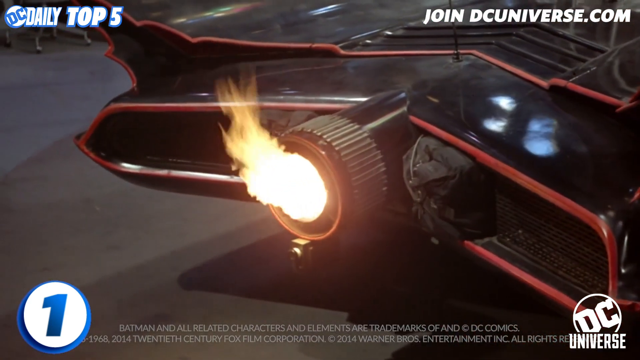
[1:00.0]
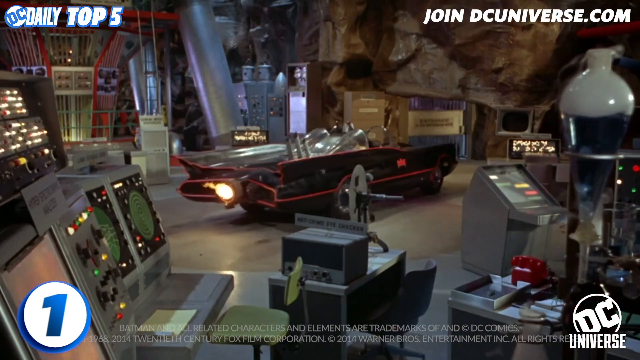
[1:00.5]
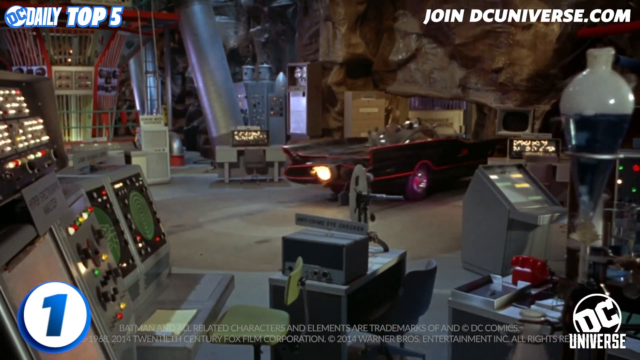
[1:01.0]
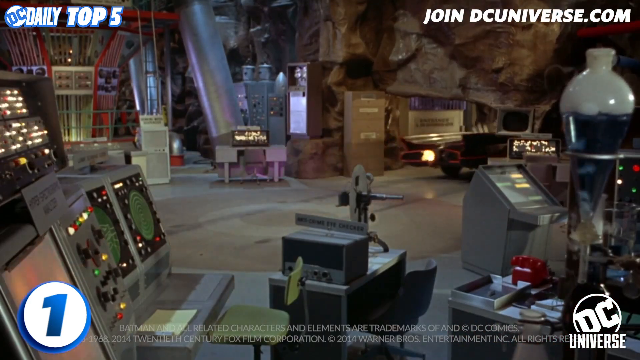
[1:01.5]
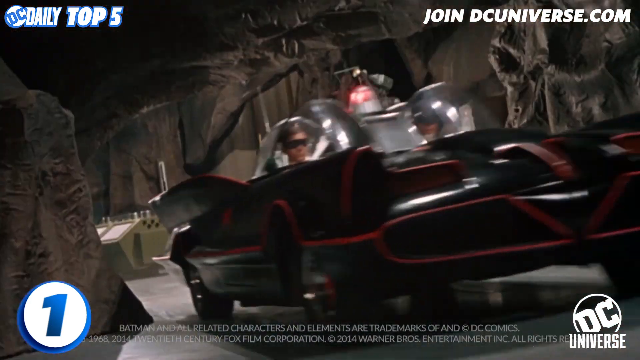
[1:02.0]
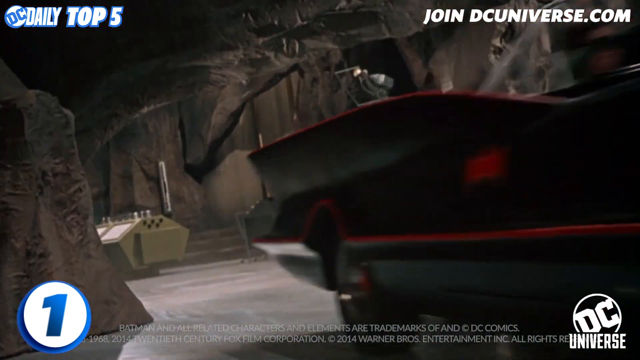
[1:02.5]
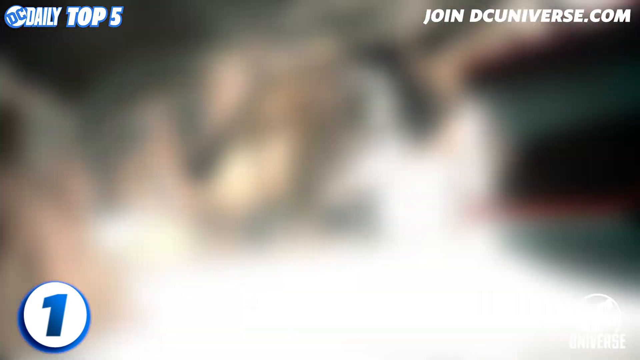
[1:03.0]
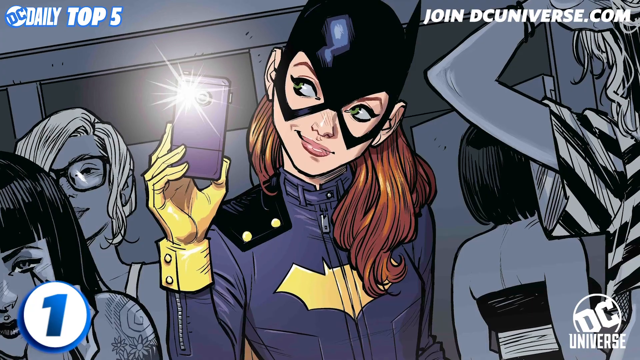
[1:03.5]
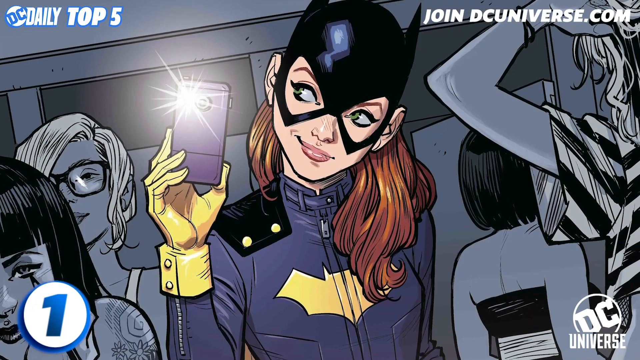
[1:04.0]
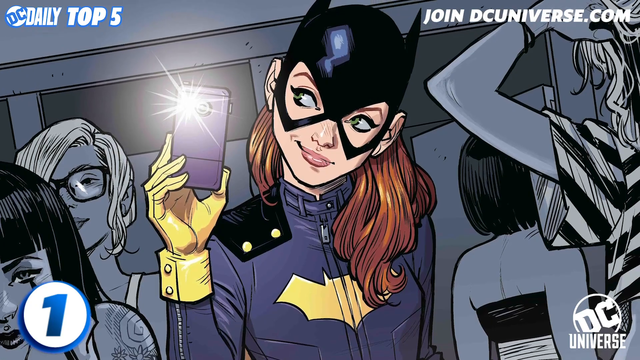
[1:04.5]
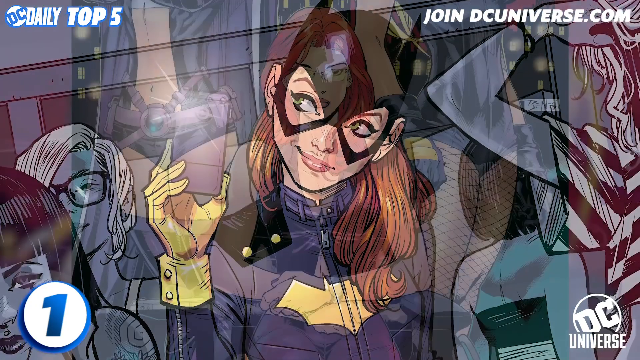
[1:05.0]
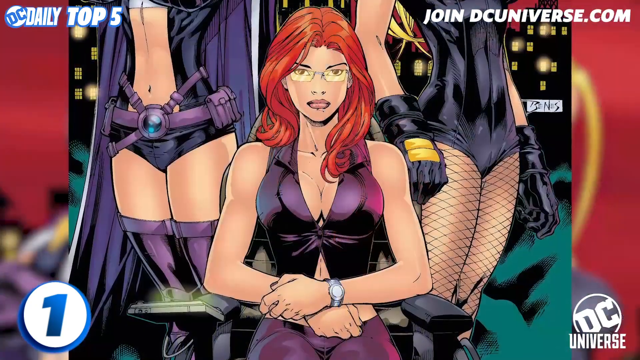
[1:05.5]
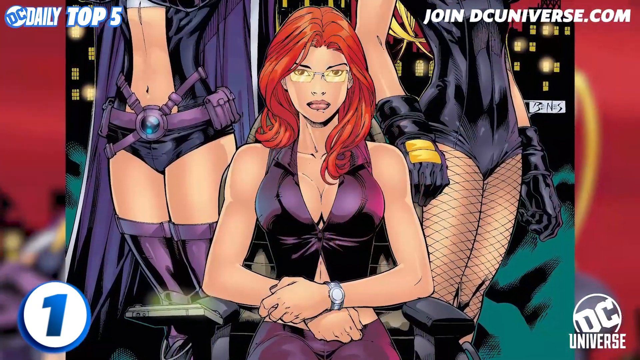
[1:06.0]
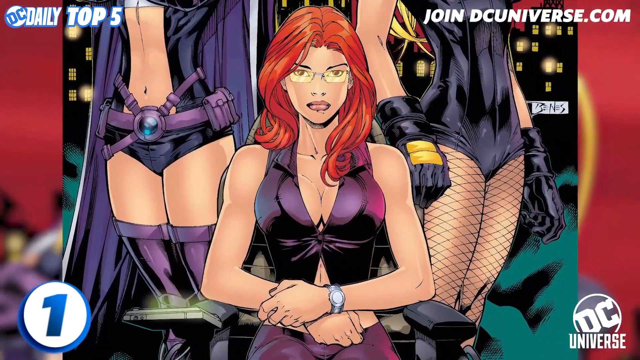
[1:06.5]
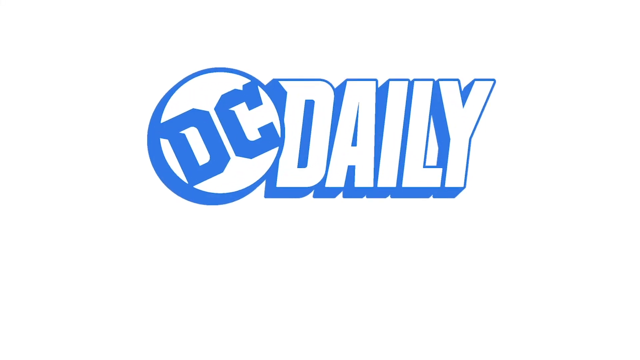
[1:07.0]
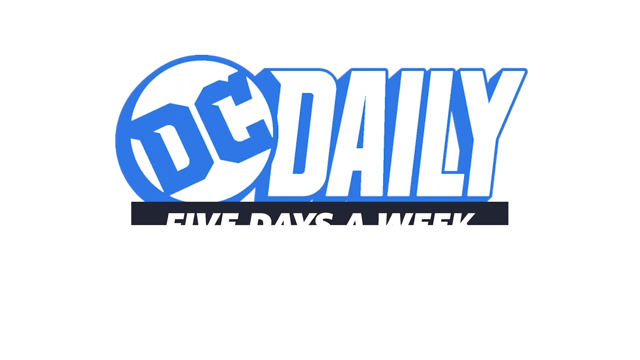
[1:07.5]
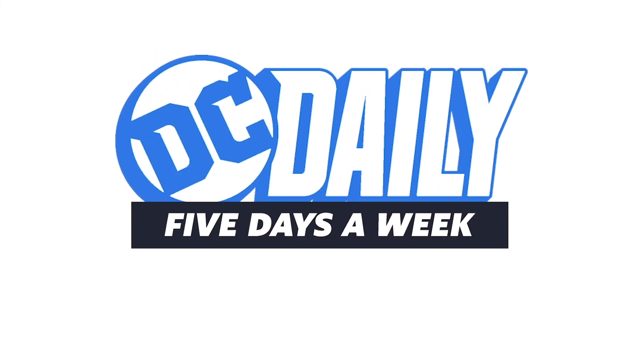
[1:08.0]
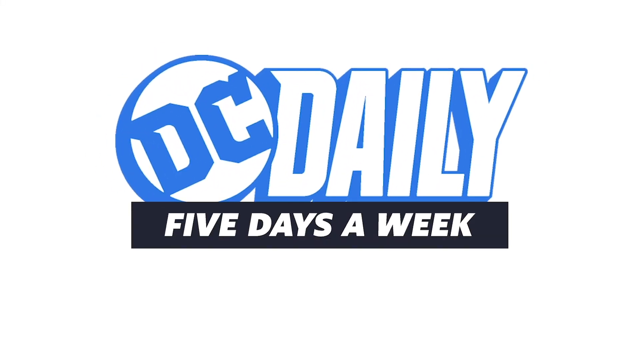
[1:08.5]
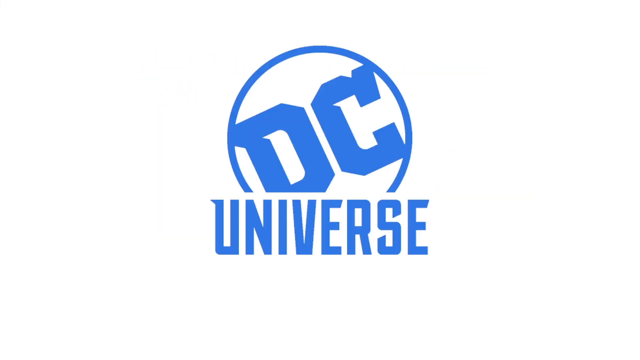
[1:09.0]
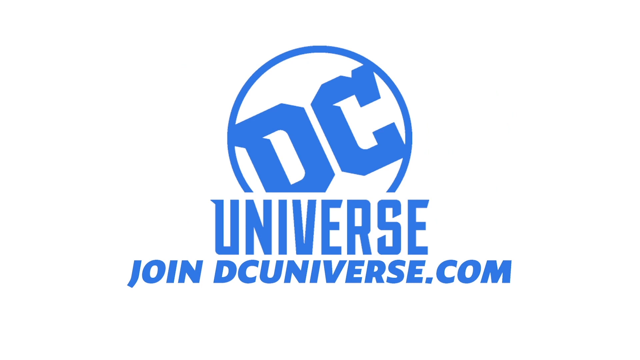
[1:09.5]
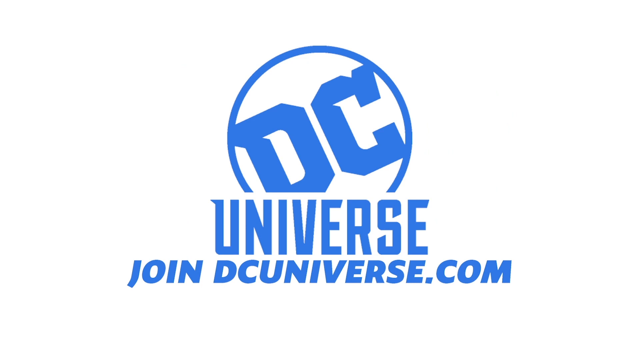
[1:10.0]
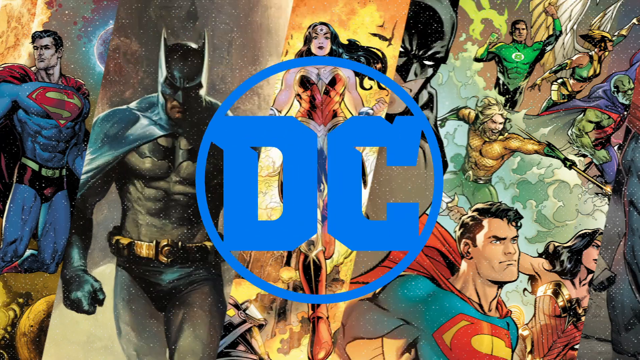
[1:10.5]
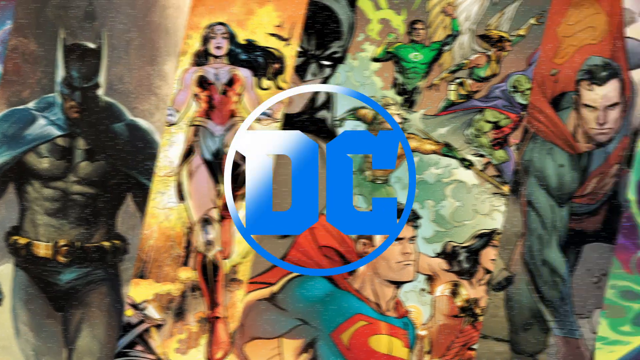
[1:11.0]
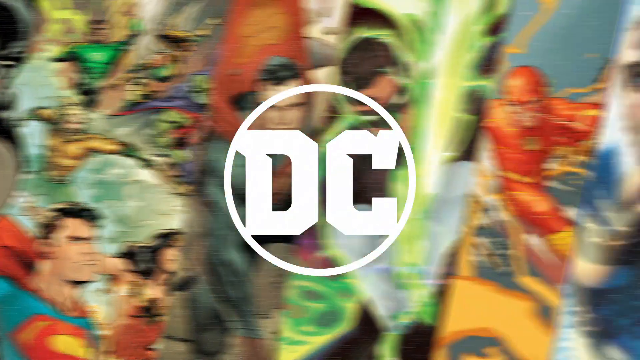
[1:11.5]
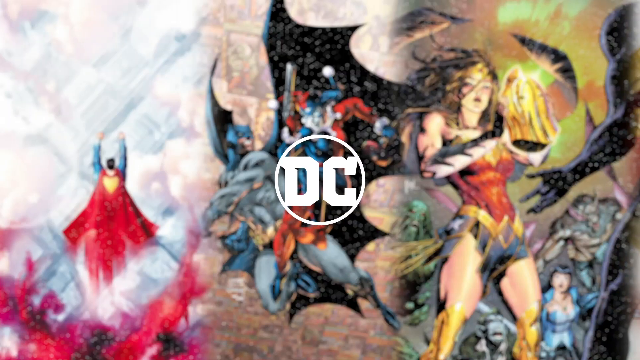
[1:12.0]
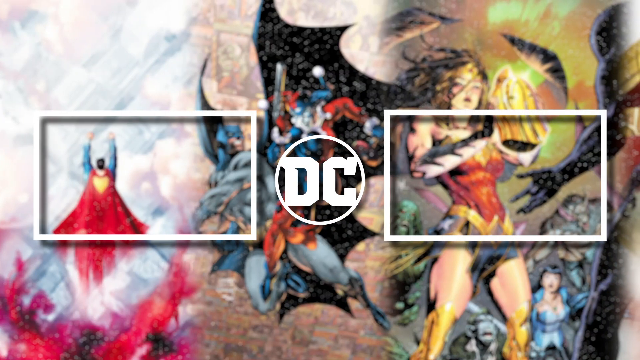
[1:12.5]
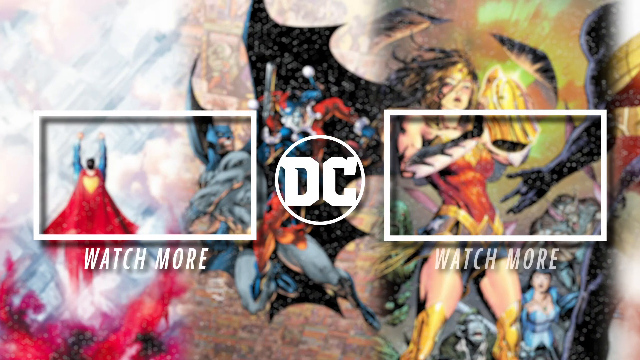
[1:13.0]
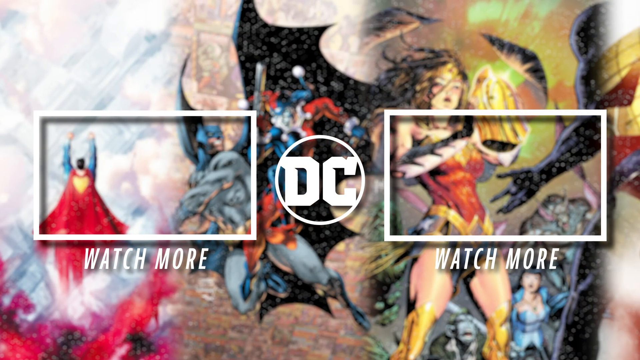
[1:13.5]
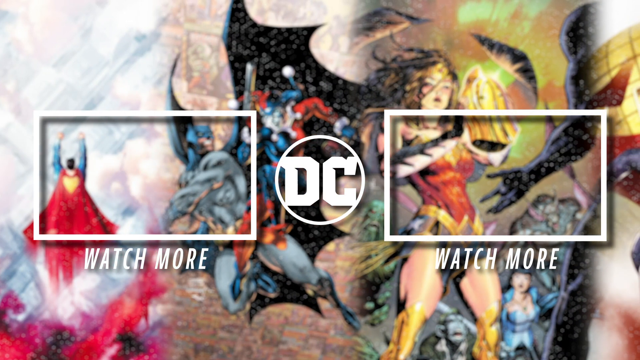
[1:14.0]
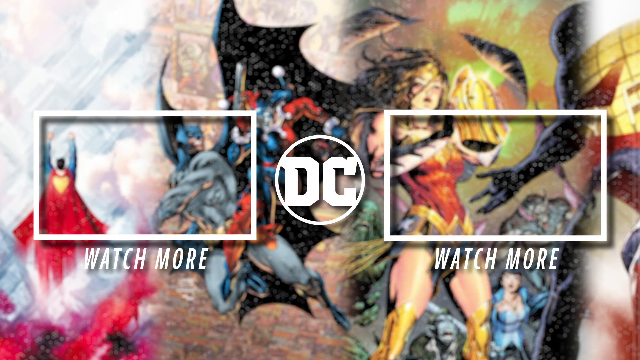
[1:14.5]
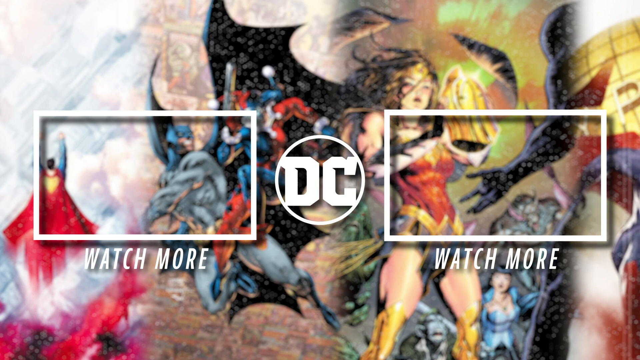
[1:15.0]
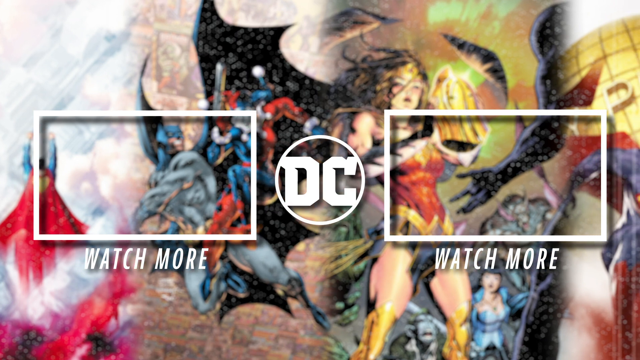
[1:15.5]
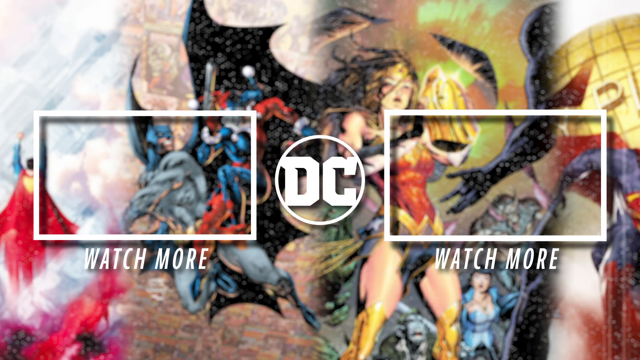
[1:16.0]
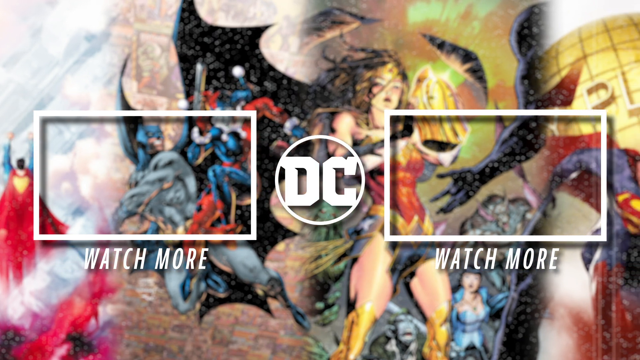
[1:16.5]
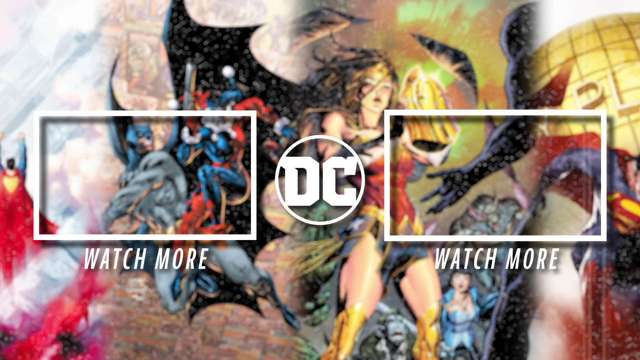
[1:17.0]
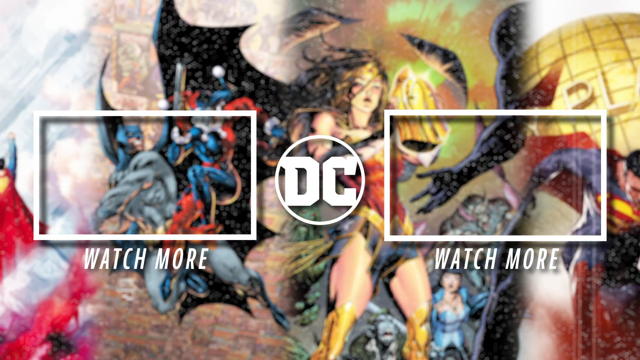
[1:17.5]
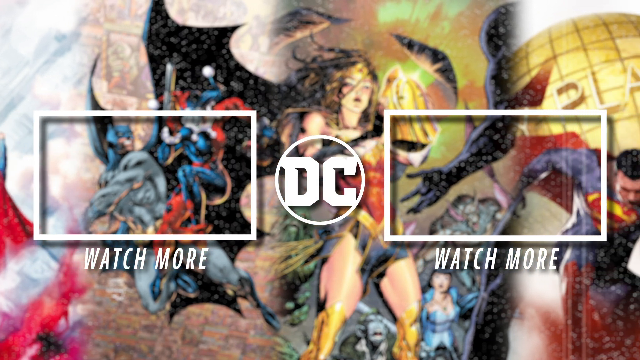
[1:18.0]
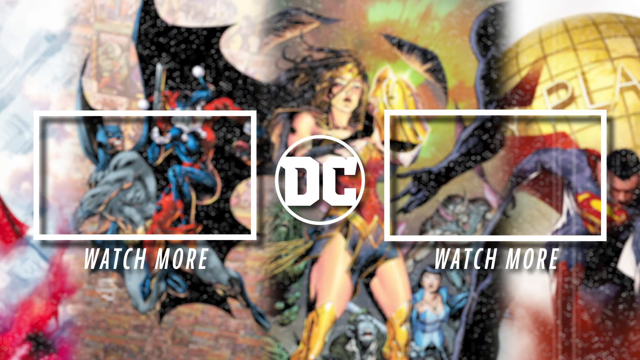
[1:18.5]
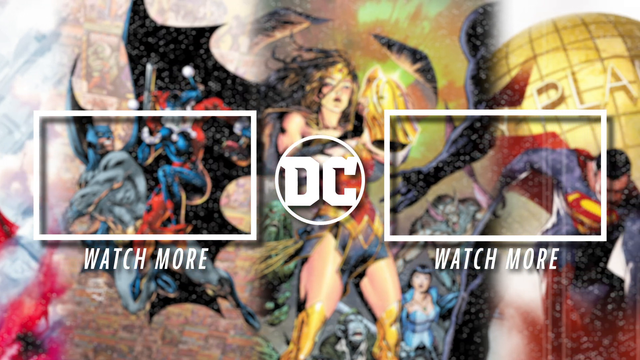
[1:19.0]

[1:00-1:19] Only the back end of the Batmobile is visible, with the rest of it going up off the screen on the right. A flame comes out of the big round black tailpipe in the center. The car is black with red accents. It zooms off through the Batcave to the right, and the video cuts to a forward shot as it drives off the right side. A comic image shows Batgirl holding a cell phone with a camera flash in her left hand, with a couple of other girls around; it looks like a bathroom or a locker room. The video cuts to a sitting girl with red hair and glasses in a low-cut, sleeveless top, with a large bust; the torsos down of two girls are visible, one to her left and one to her right. Next, on a white background, "DC Daily" is in the center, with "five days a week" below it in white lettering on a black background. That wipes away to the DC logo on blue with white around it and a black-blue border; underneath it reads "Universe," and underneath that "join dcuniverse.com." A swipe reveals a bunch of drawn characters. It swipes off to the left, leaving "DC" in white in the middle with more characters in the background, including Wonder Woman, Superman and Batman. On either side of the "DC" is a small white rectangle outline, and beneath each one it says "watch more," as the view slowly pans to the right showing more images of the superheroes.